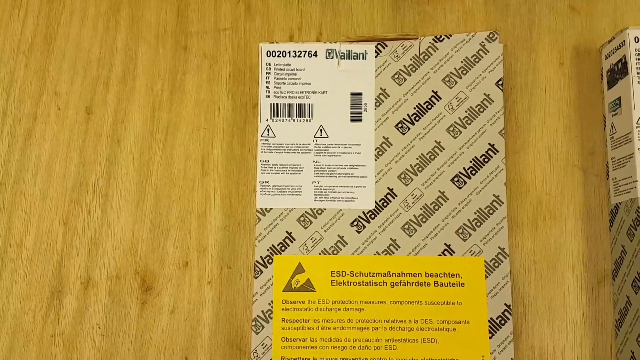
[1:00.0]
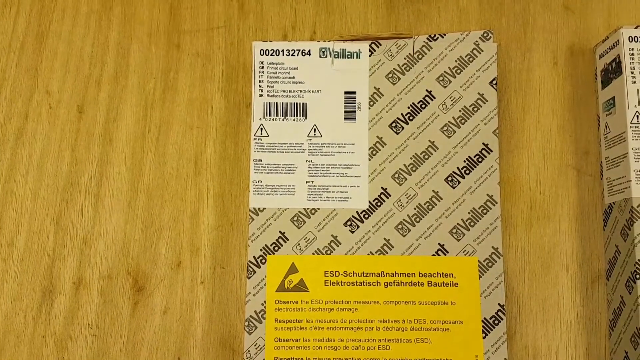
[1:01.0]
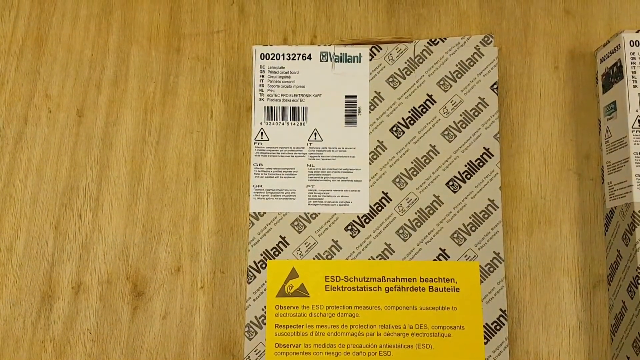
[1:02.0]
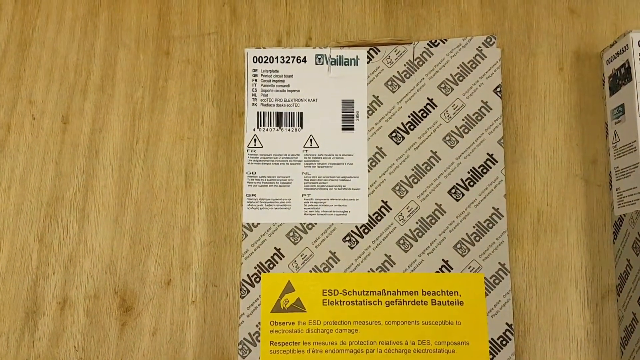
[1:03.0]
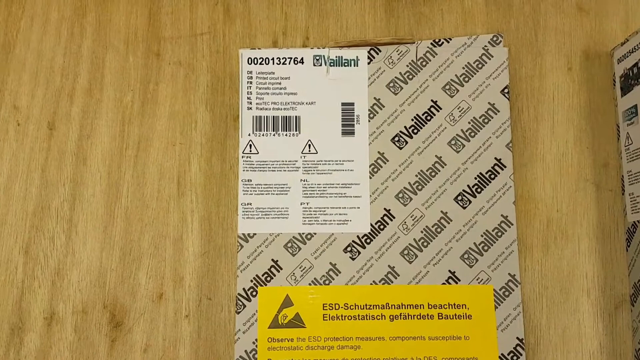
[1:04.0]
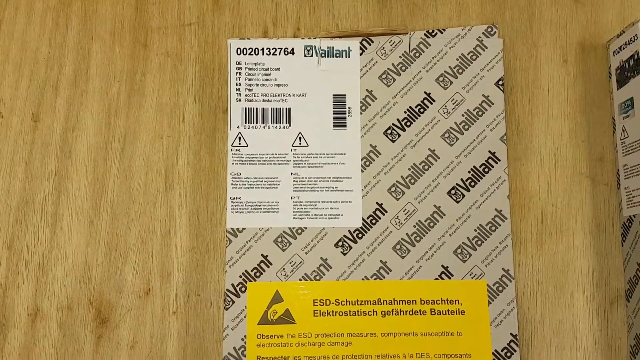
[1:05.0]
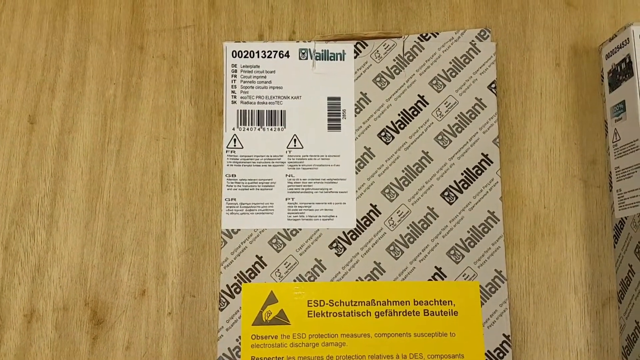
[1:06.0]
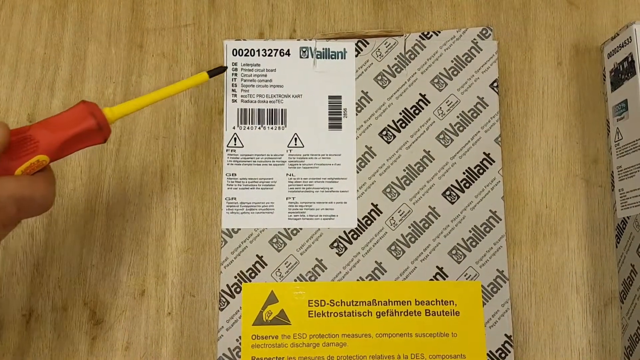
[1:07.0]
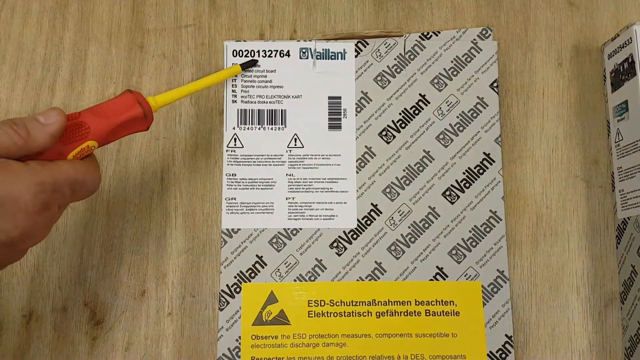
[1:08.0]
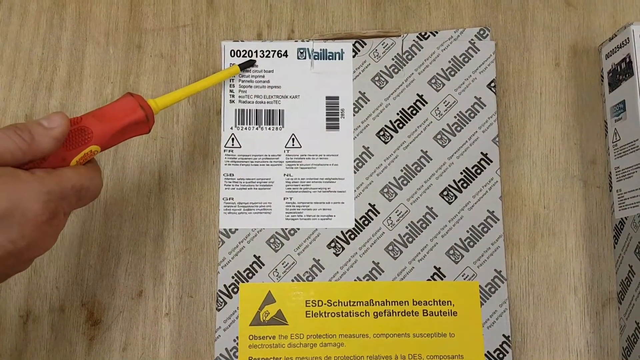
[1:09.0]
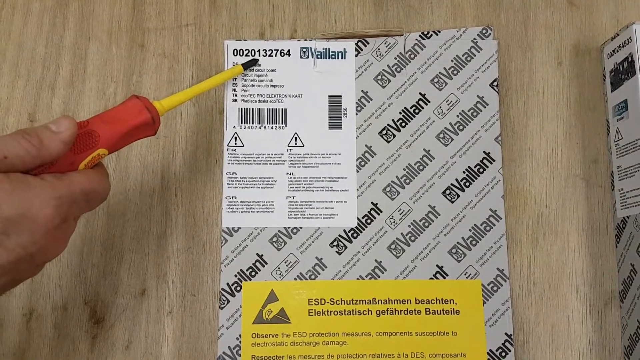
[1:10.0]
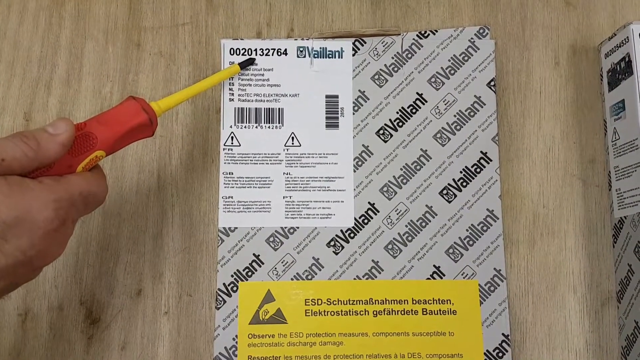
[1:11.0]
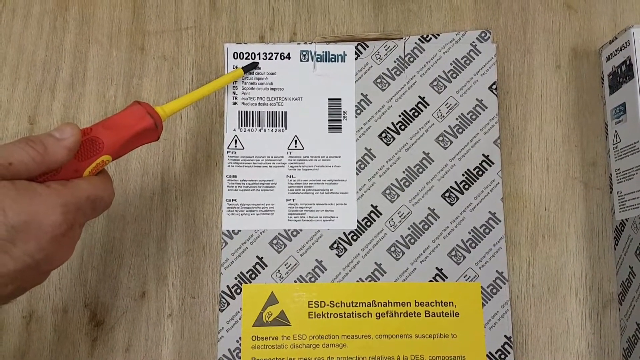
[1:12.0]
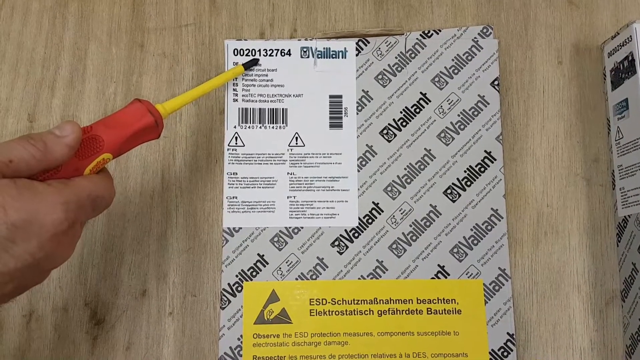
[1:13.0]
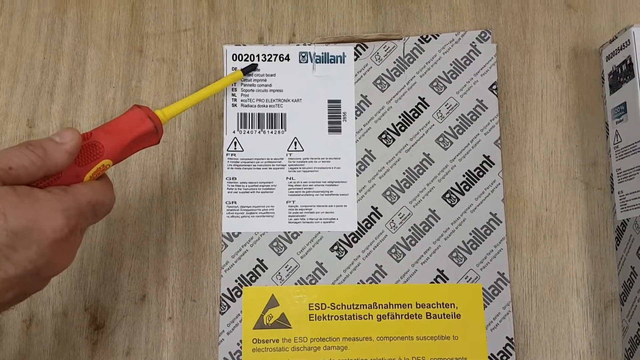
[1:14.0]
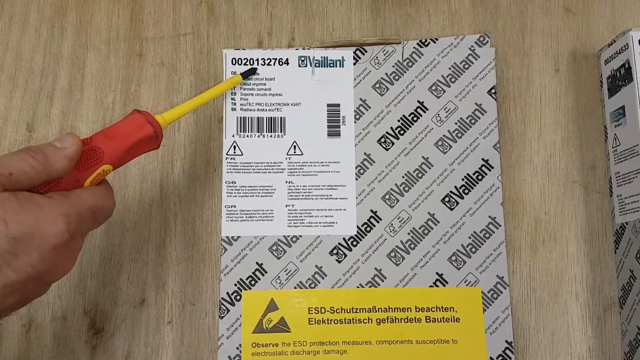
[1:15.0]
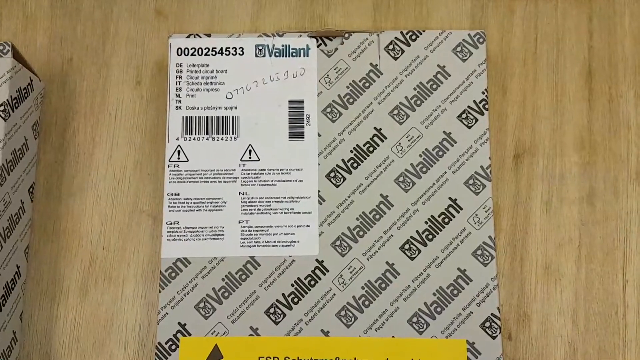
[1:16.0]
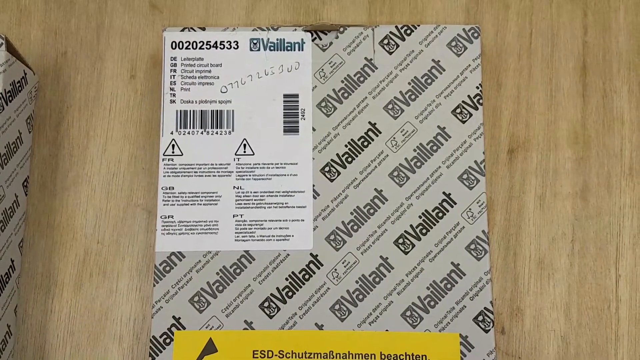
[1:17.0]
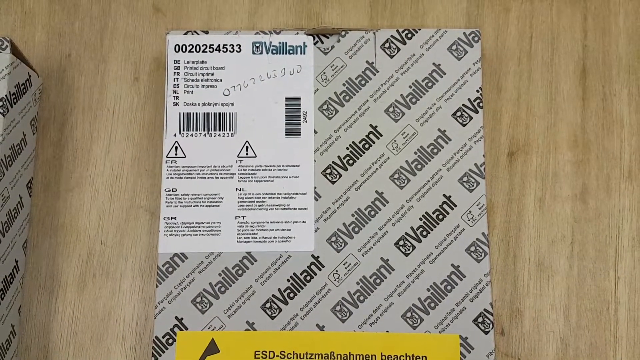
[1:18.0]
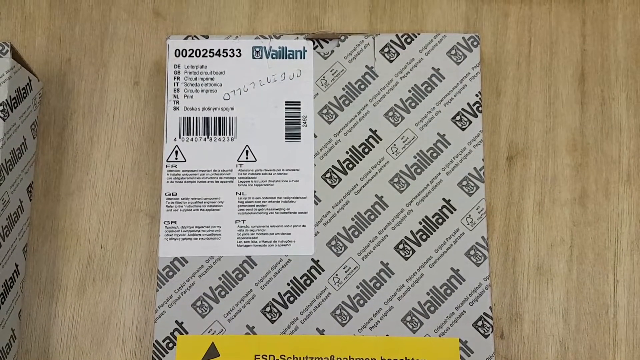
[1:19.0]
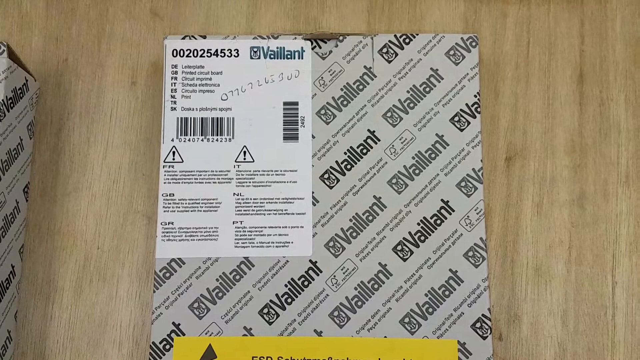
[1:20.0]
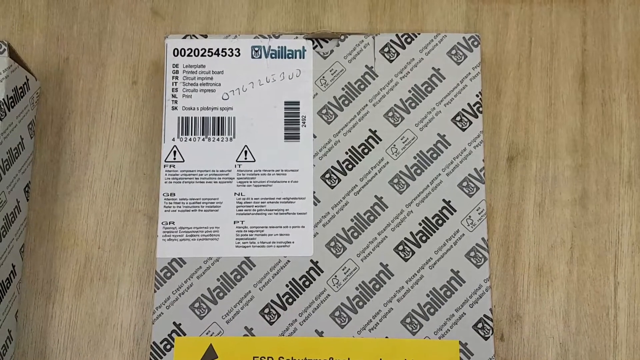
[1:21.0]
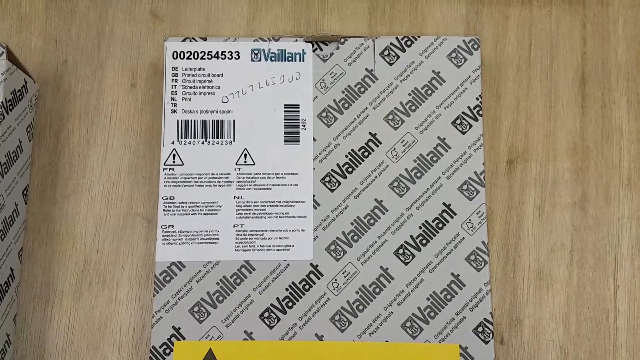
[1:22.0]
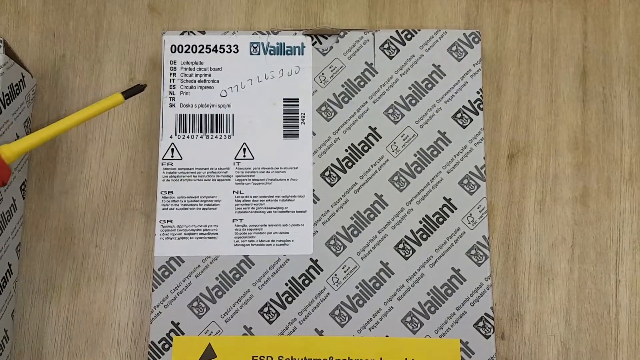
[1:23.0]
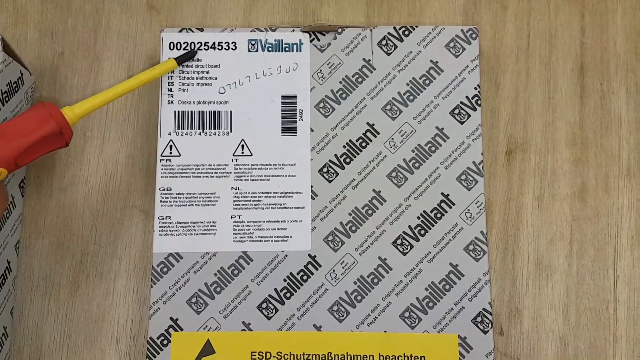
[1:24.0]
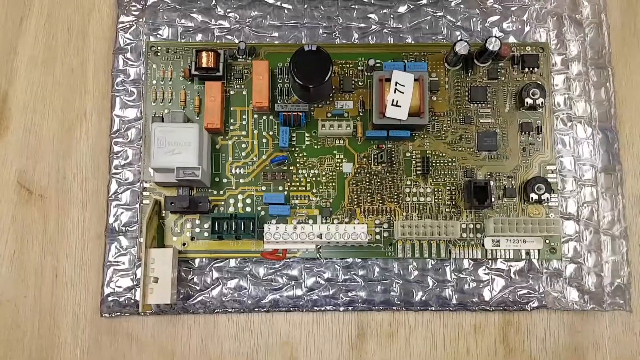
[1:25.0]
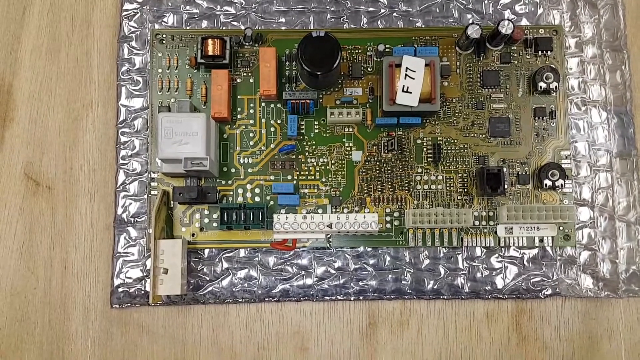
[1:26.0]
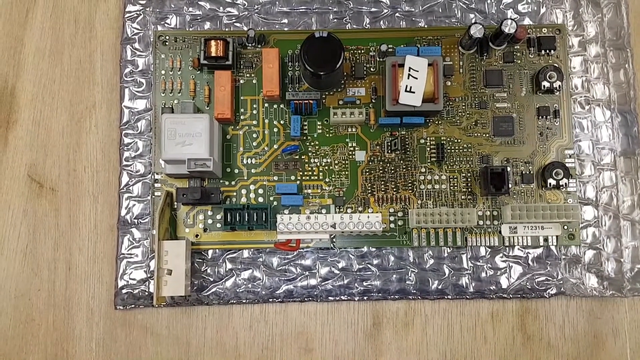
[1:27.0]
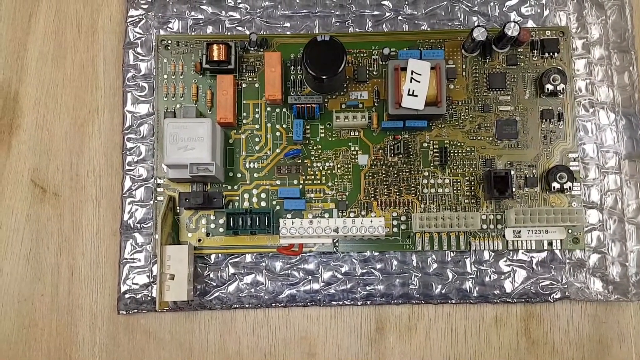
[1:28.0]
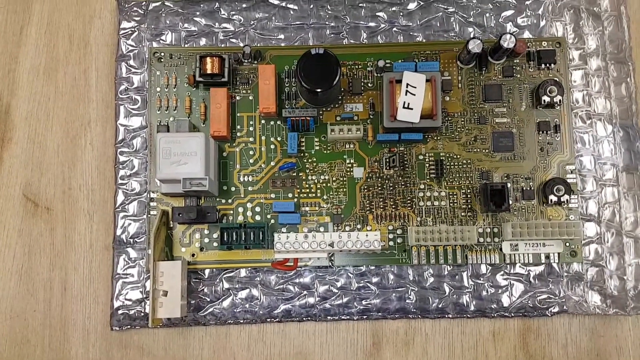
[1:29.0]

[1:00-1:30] Something in German is shown that appears to be a box, probably the box that houses the Vaillant unit; it almost looks like a stack of computer paper. A screwdriver points at a number on it, 0020132764. Then another number, 07767205300, gets written onto a spot on the box very near that first number. After this there is a brief glimpse of what looks like a circuit board, possibly what is inside the unit.